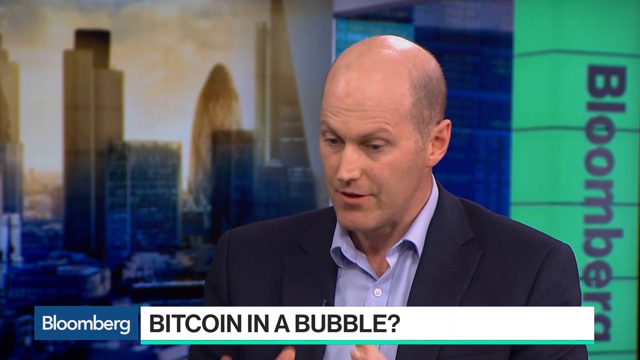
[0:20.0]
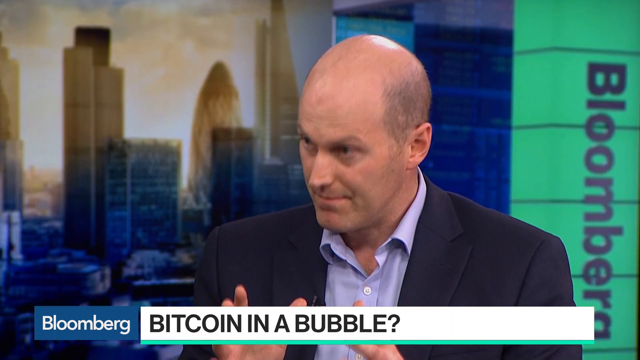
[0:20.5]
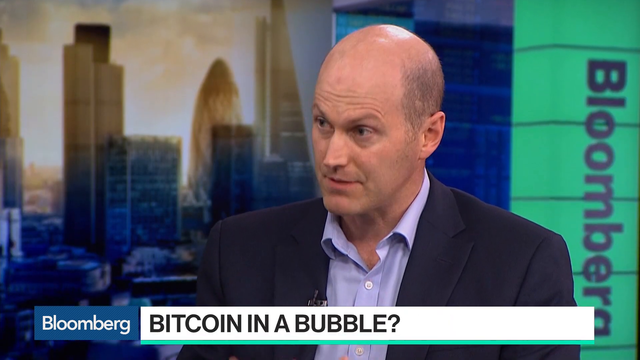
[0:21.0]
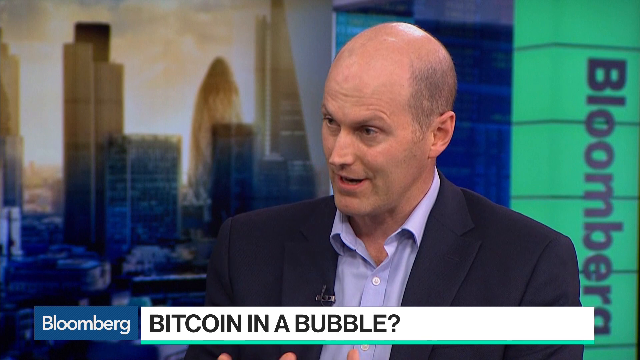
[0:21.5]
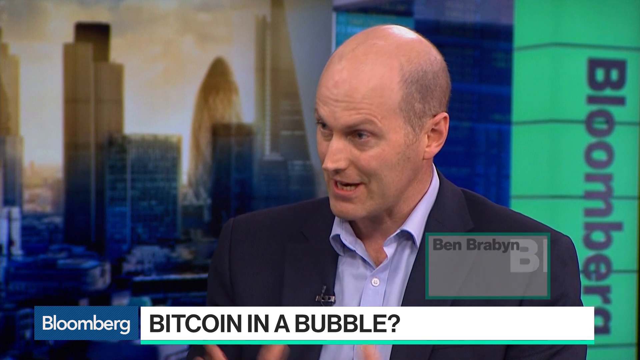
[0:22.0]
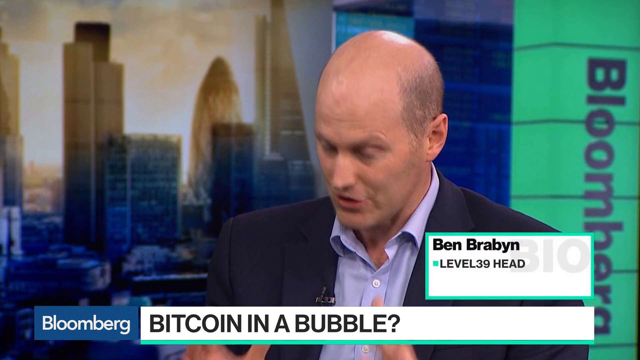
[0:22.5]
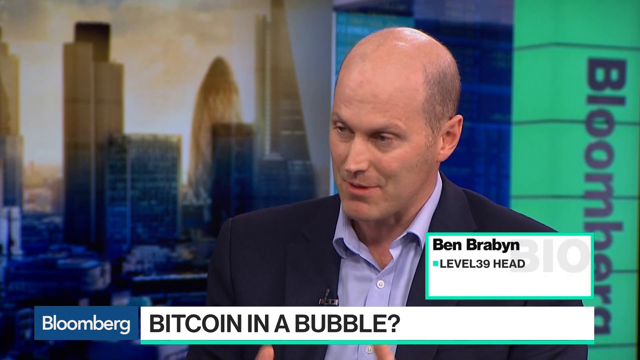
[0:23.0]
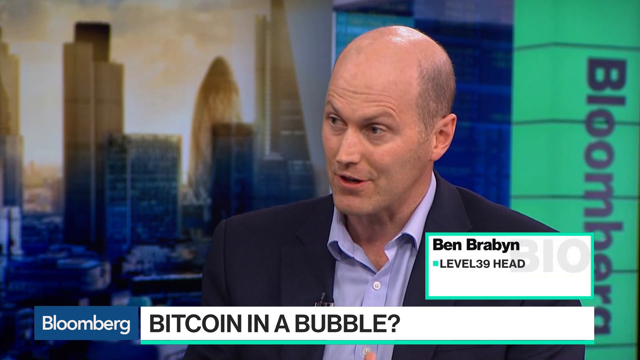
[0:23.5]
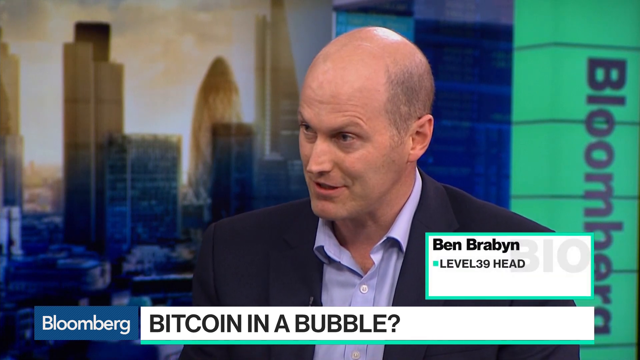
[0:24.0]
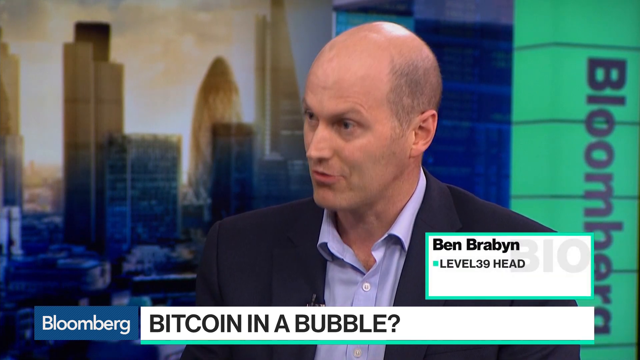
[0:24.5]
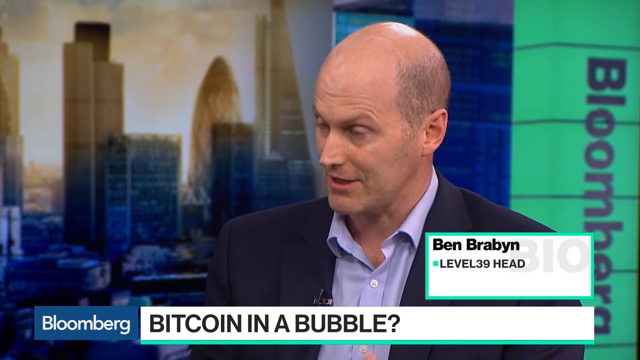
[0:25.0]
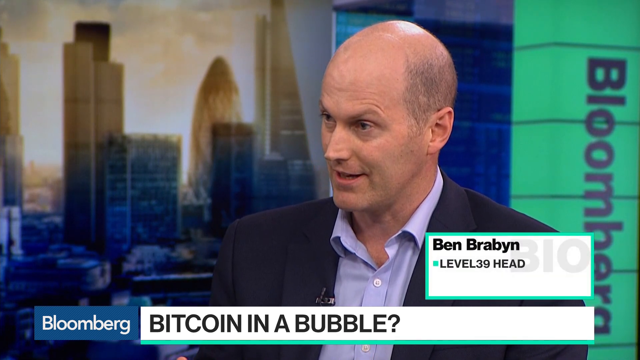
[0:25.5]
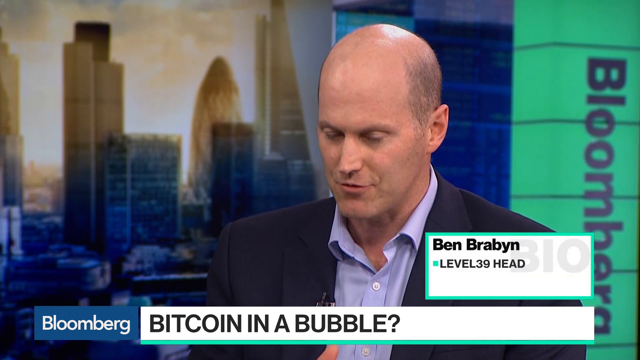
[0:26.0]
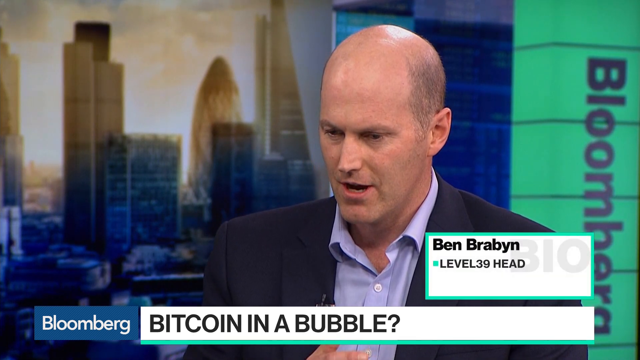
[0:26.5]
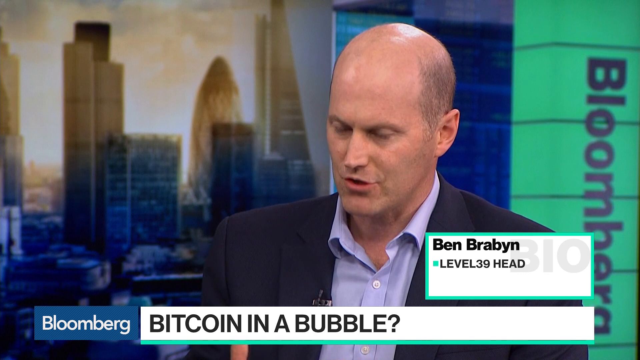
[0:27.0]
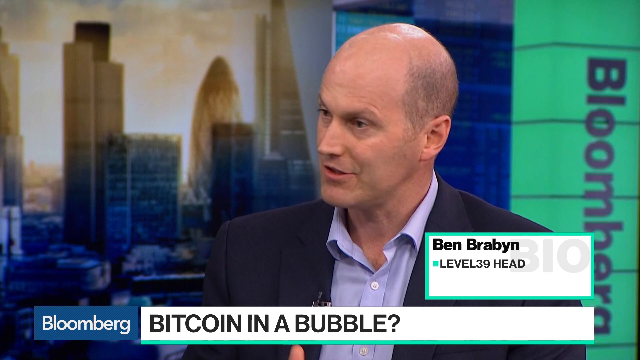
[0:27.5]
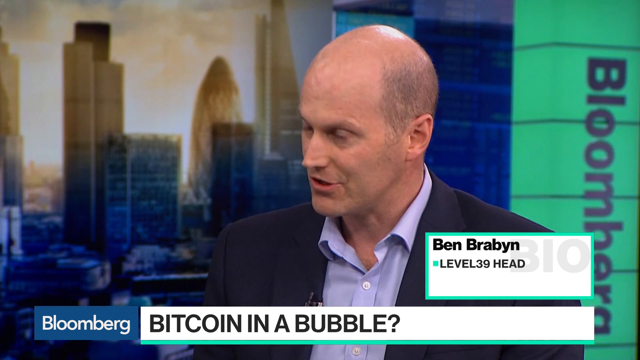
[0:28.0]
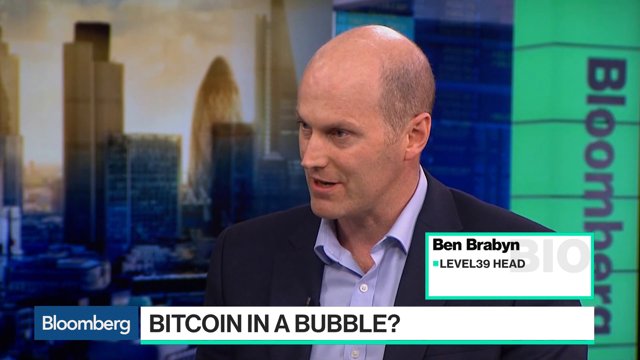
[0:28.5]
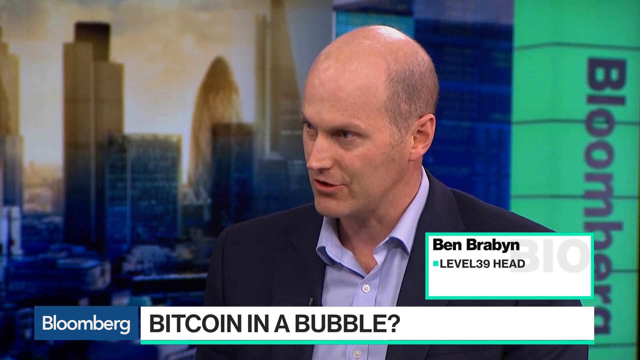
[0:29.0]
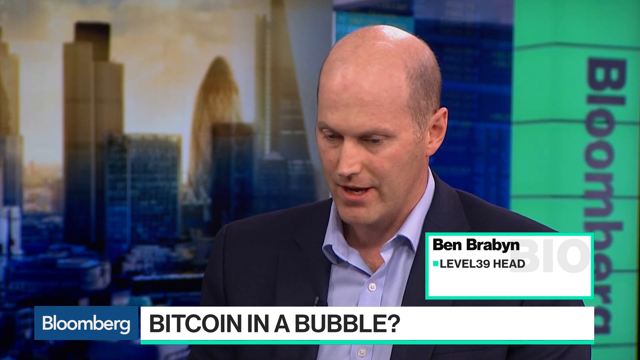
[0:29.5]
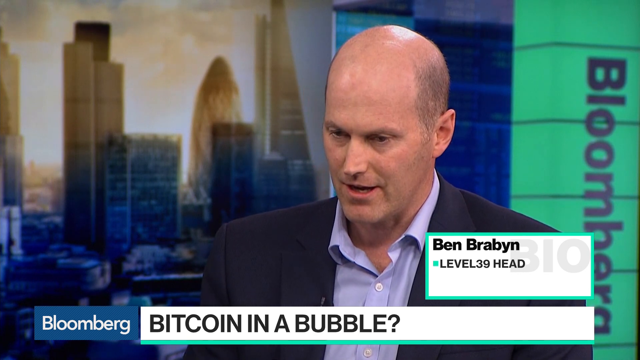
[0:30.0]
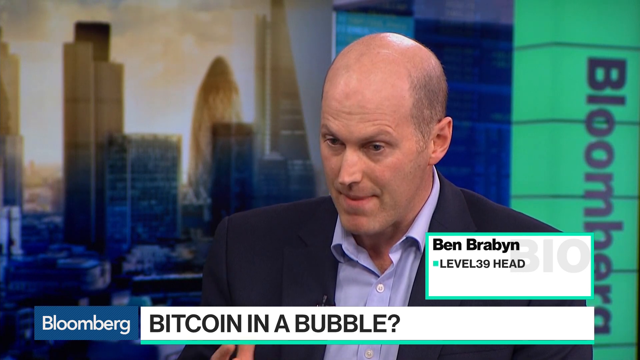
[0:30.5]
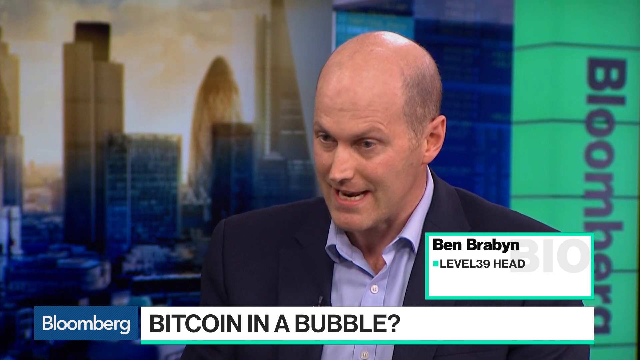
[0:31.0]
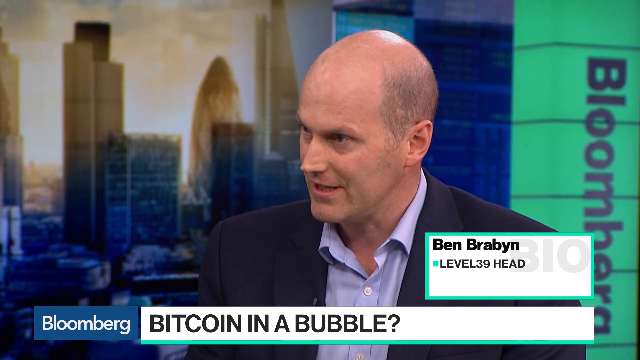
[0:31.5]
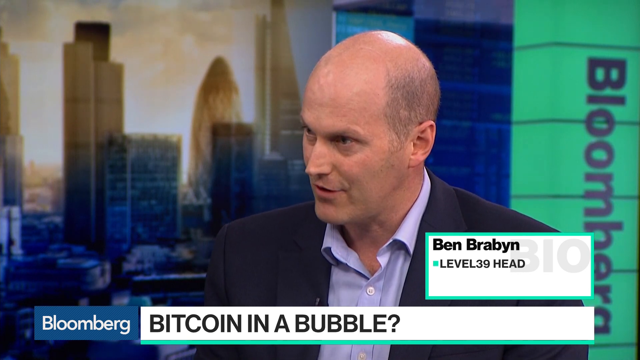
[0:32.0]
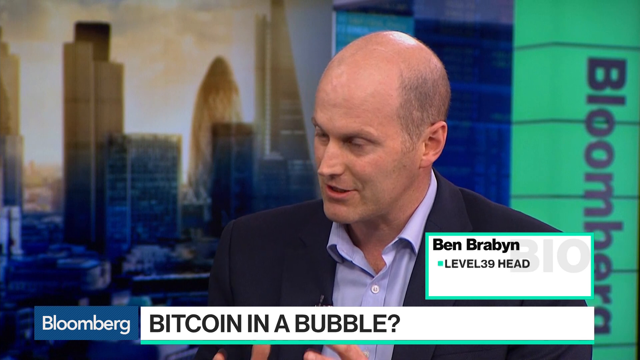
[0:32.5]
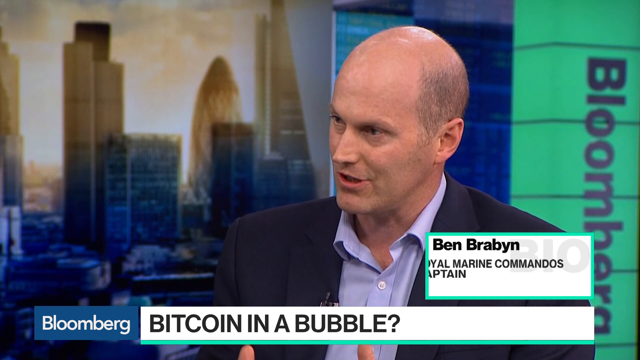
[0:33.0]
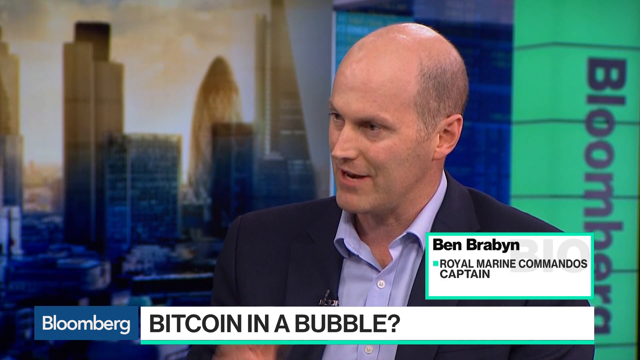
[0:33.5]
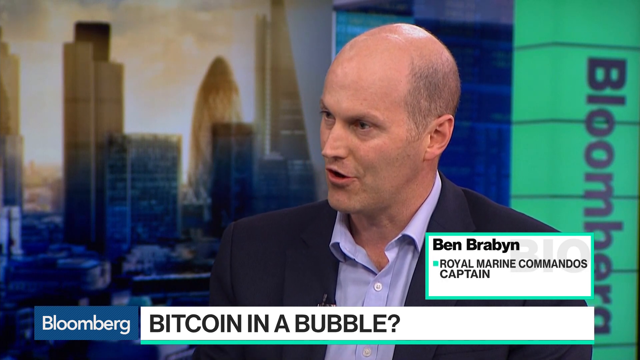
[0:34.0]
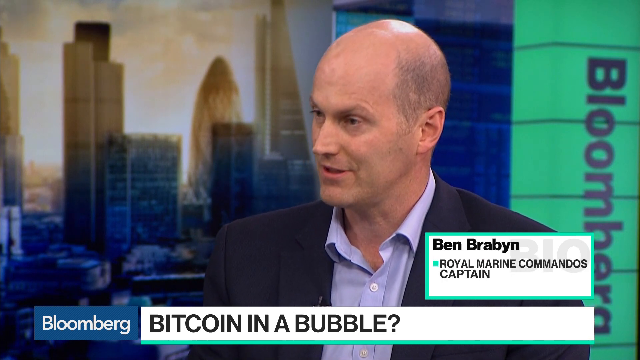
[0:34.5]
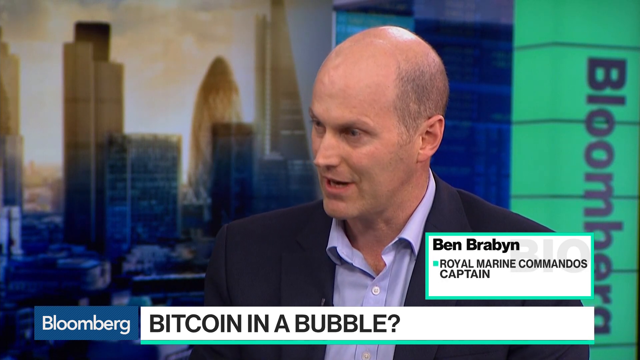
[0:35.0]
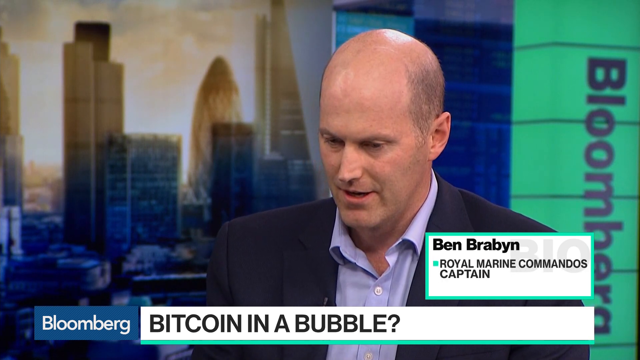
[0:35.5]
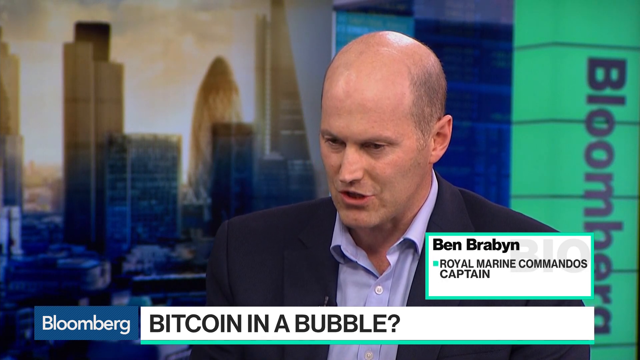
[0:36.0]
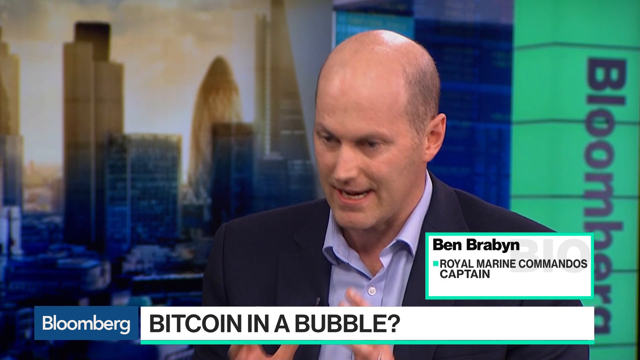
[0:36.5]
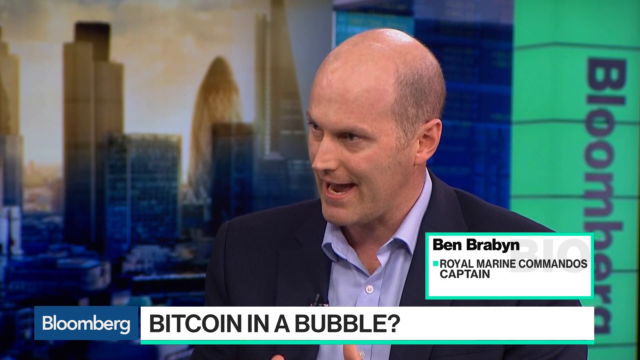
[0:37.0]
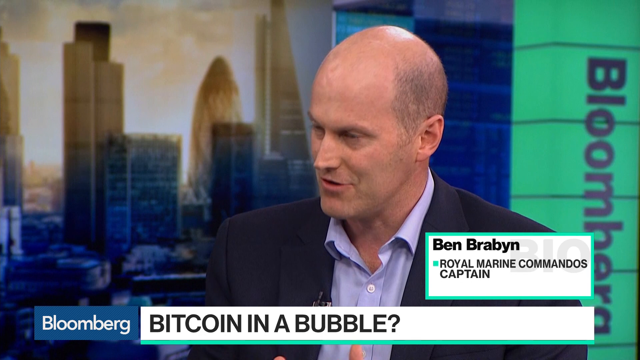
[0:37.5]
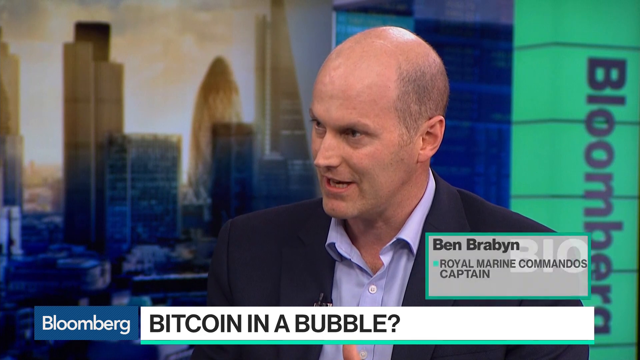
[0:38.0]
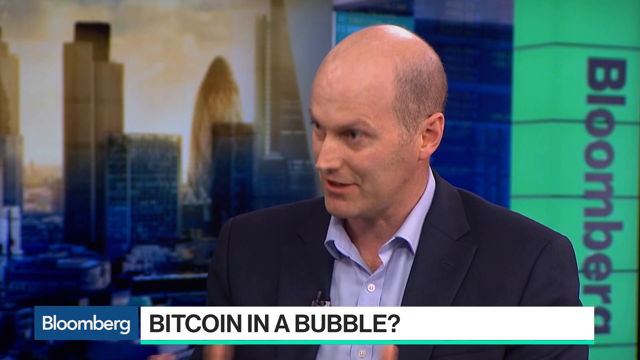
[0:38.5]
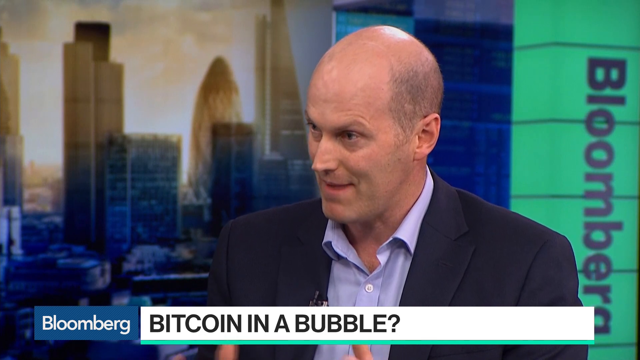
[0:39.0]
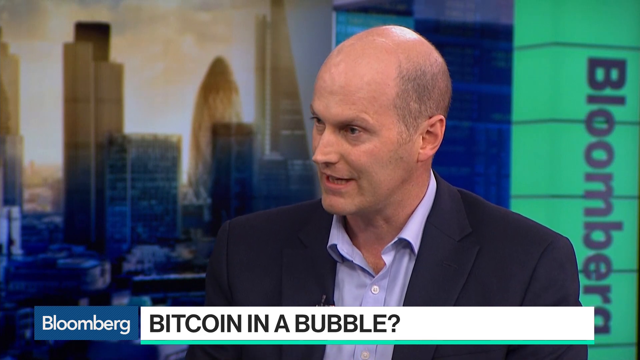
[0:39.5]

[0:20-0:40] The white man, who seems to be bald, appears to be in conversation, speaking in a very serious manner, with a caption below him reading "Bitcoin in a bubble." He still seems to be in the same news studio, with the UK buildings in the background, and still wears his dark jacket with a light blue shirt. His name is displayed as Ben Brabyn, "Level 39 head," and another credential shows him as a "Royal Marine Commandos Captain." Only the man is shown; the woman does not appear, although he is apparently still talking to her. He is still talking as the shot ends.